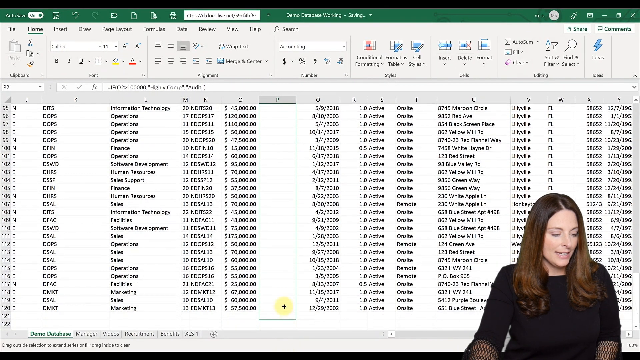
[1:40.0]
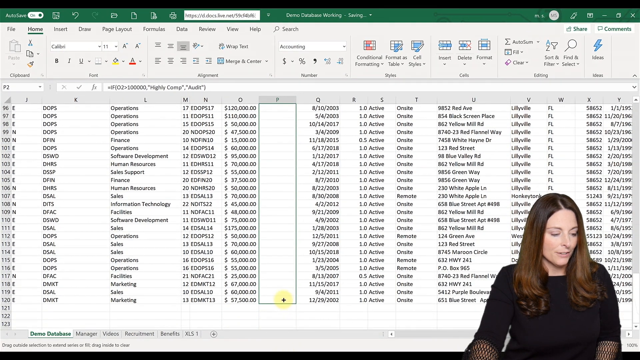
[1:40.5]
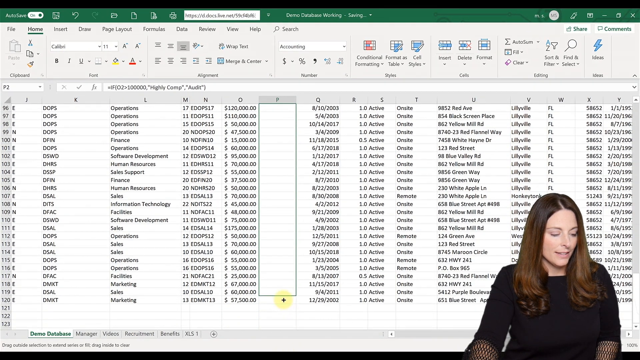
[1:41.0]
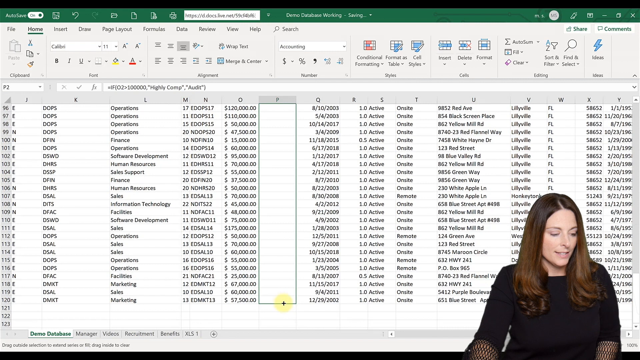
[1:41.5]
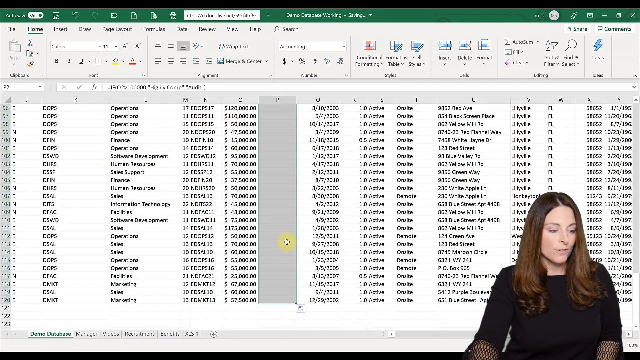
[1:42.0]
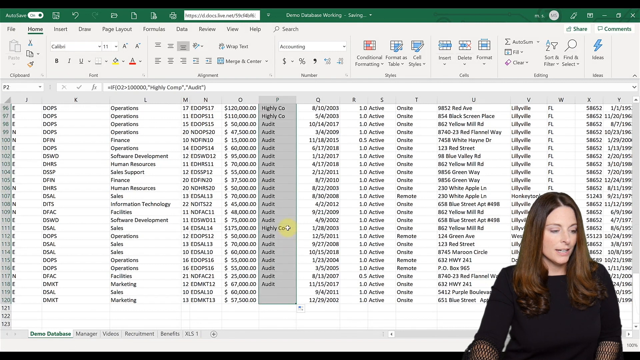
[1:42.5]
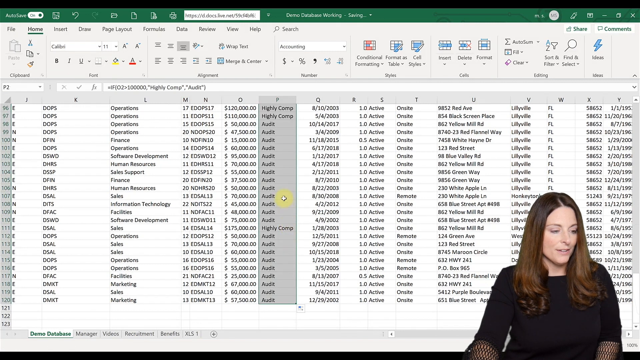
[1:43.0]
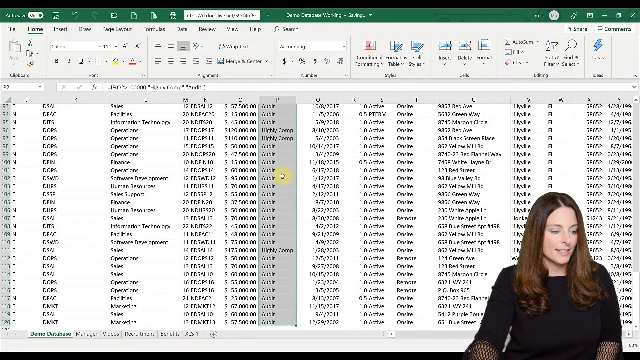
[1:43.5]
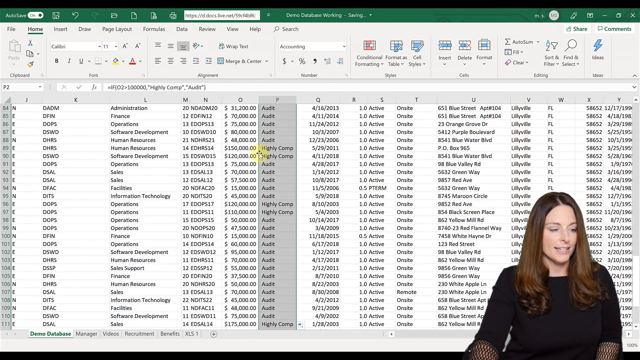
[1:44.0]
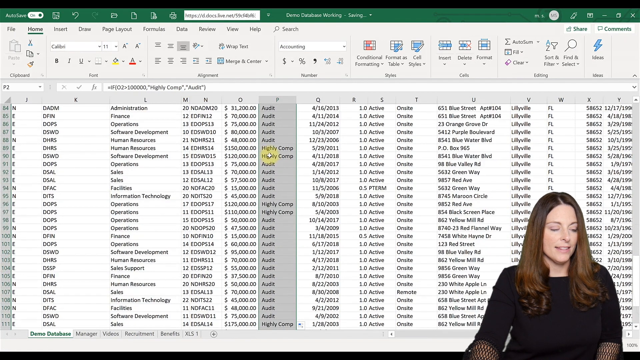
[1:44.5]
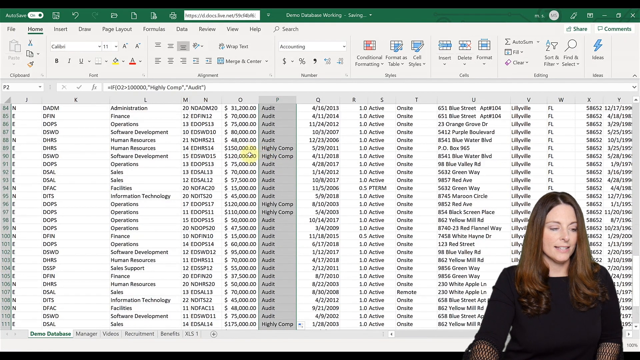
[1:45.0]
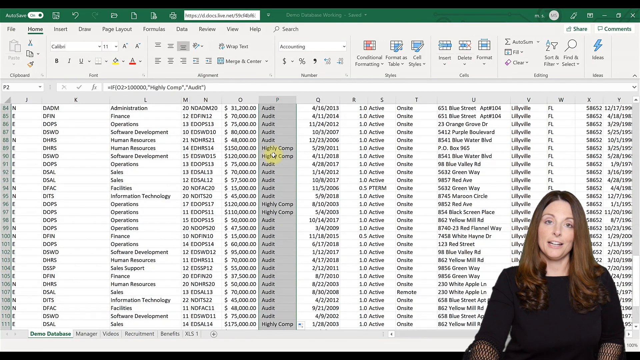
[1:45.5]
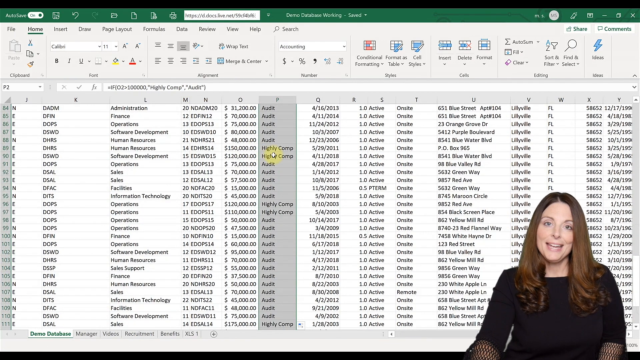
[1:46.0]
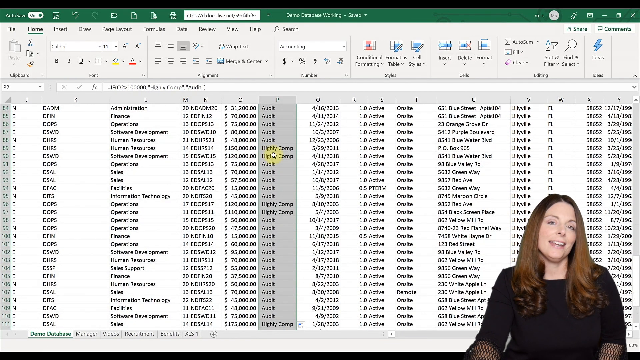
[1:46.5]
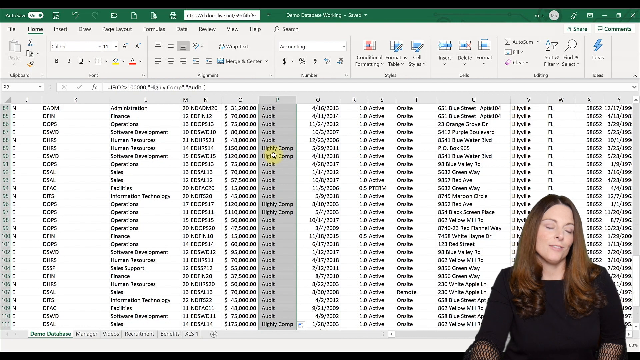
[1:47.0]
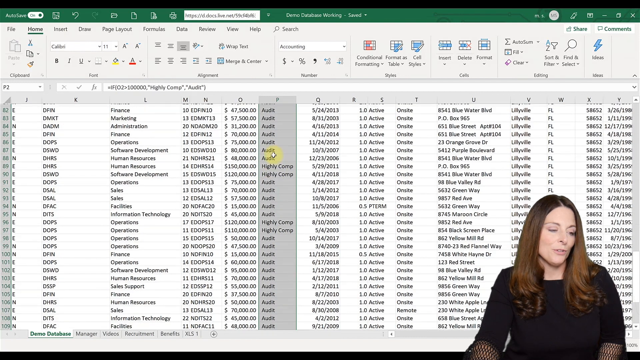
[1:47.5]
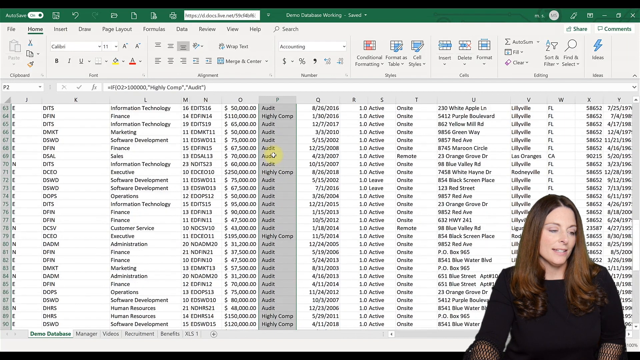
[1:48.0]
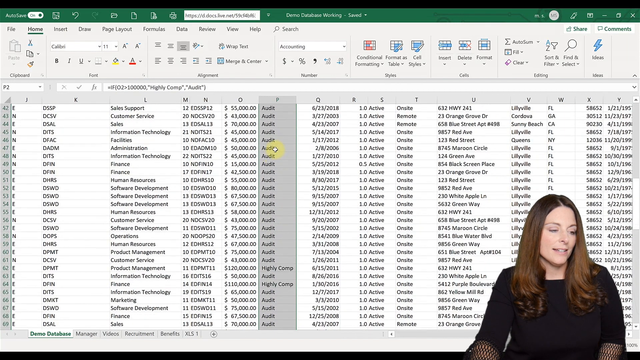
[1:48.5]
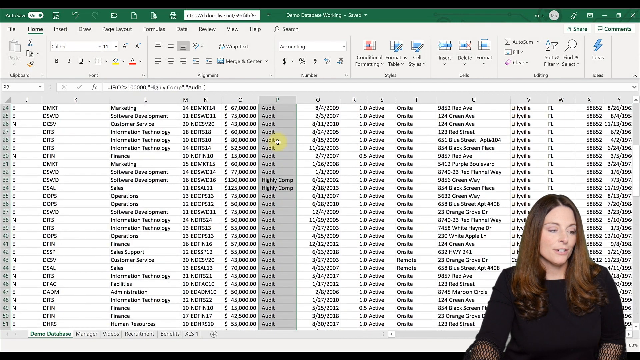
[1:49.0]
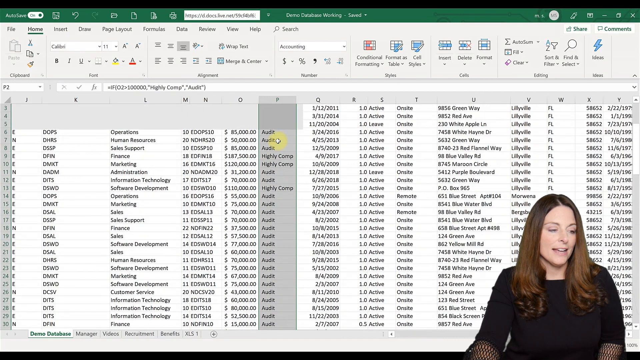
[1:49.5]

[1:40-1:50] An Excel spreadsheet is in the background with a Caucasian woman with brown hair and a black shirt on the right, talking while typing on a keyboard that is out of view. She keeps looking down at the monitor on her left, the viewer's right. Column P is selected with a green border running all the way down to row 121. Column O has numbers and column Q has dates. She stops at 120, and the results appear in the column: most of the cells say "audit", while some say "highly comp", for example rows 95, 97, 111, 89 and 90. She moves the cursor up, kind of highlighting entries as she talks, and then scrolls back up to the top.